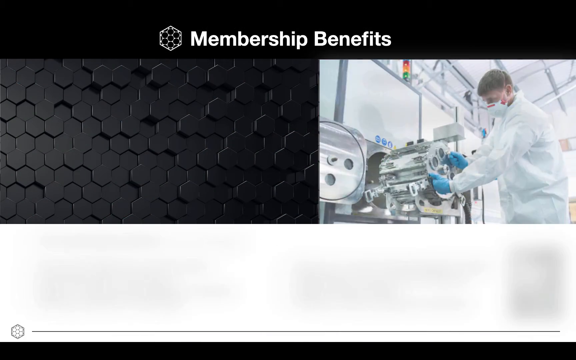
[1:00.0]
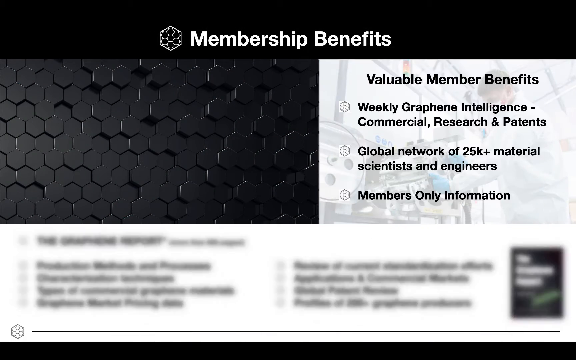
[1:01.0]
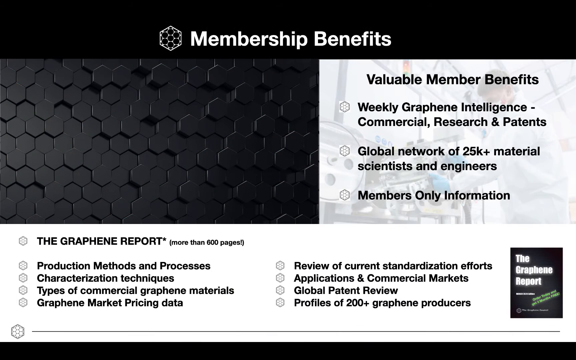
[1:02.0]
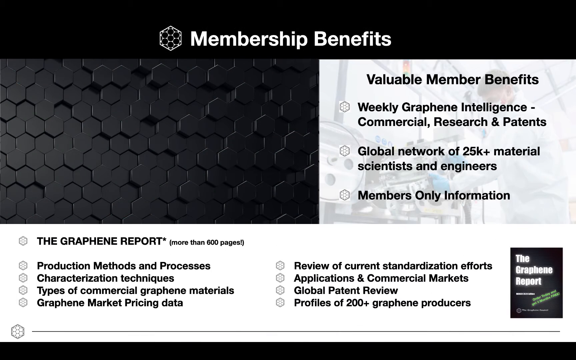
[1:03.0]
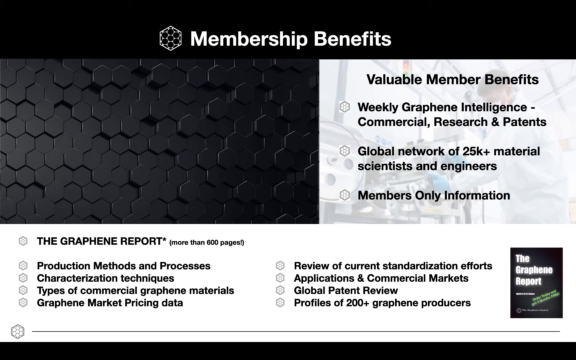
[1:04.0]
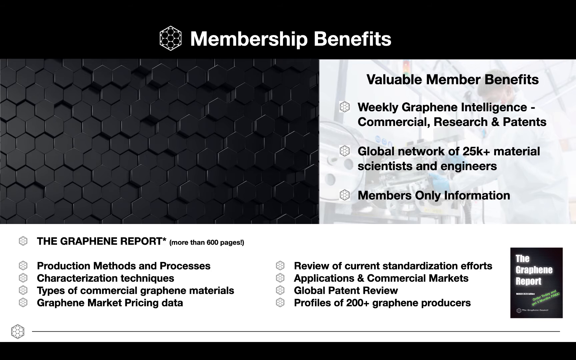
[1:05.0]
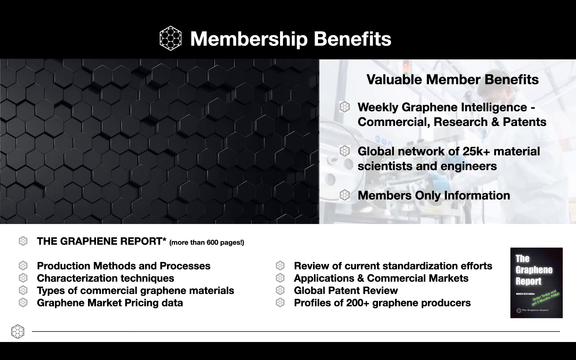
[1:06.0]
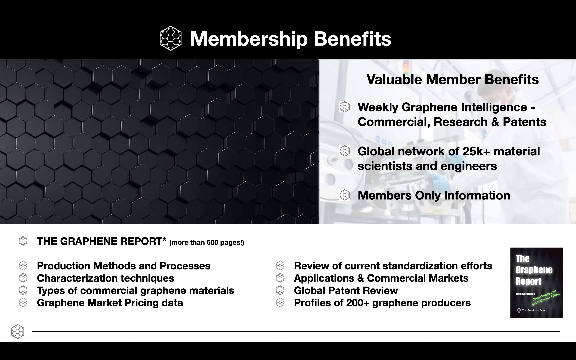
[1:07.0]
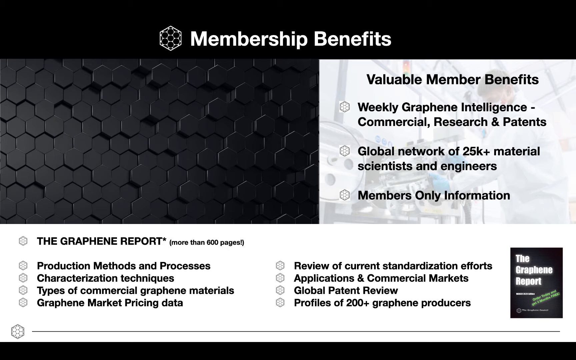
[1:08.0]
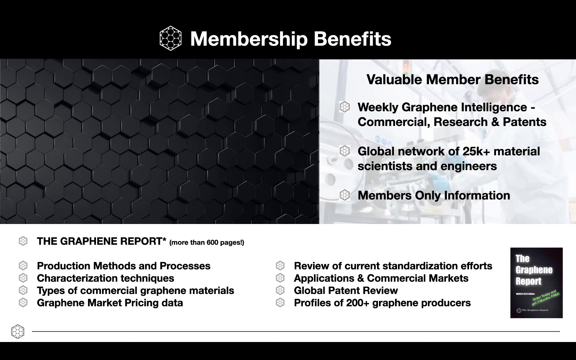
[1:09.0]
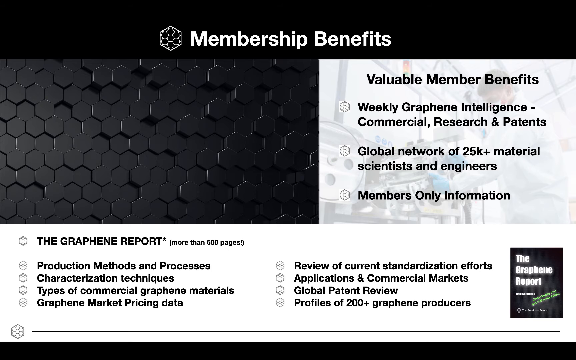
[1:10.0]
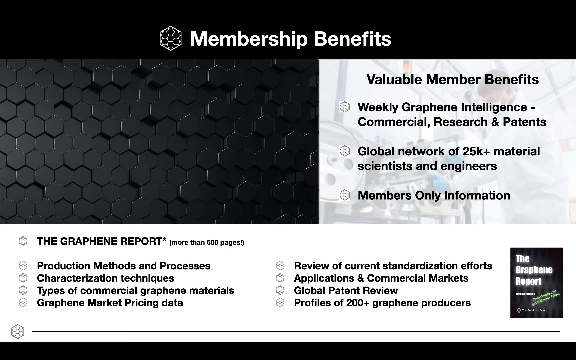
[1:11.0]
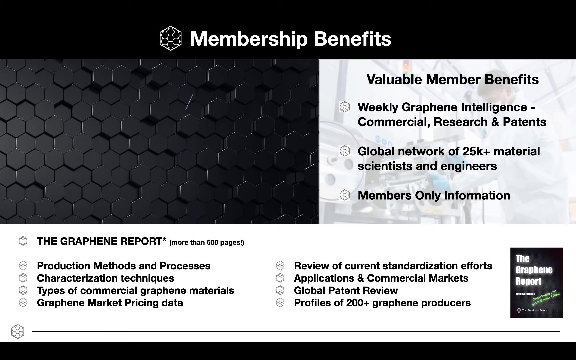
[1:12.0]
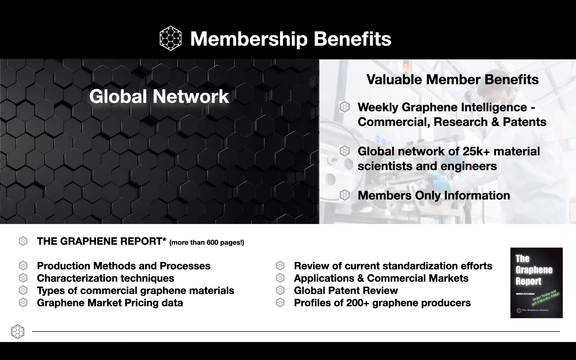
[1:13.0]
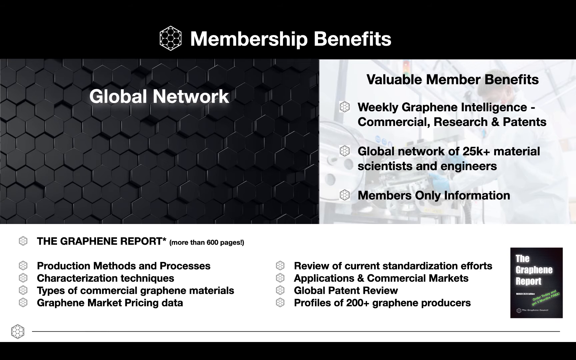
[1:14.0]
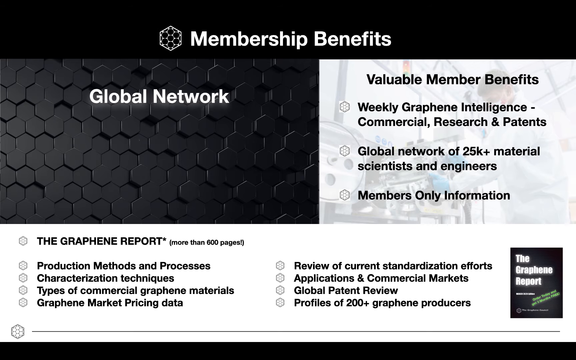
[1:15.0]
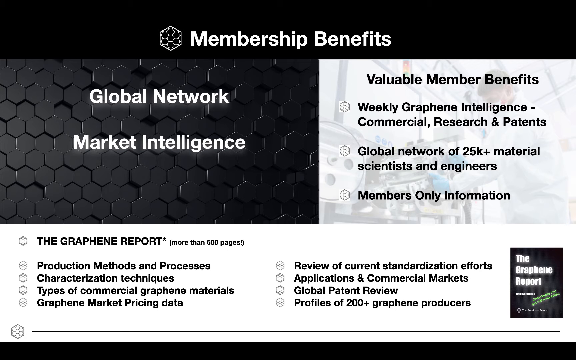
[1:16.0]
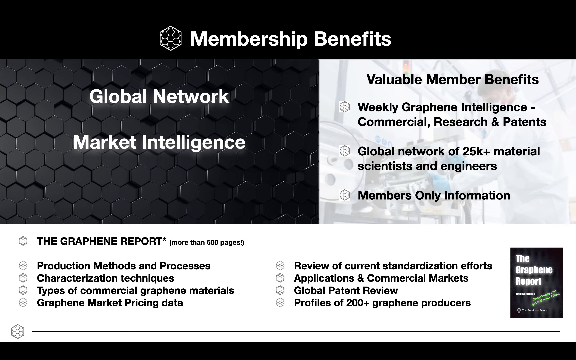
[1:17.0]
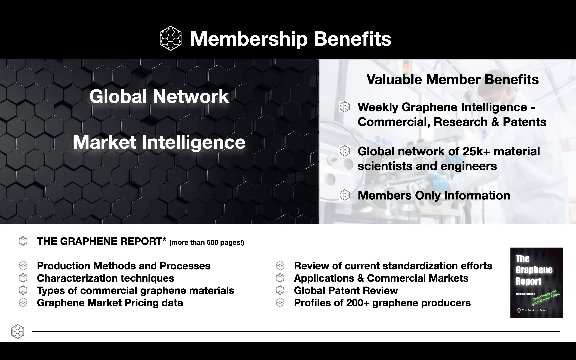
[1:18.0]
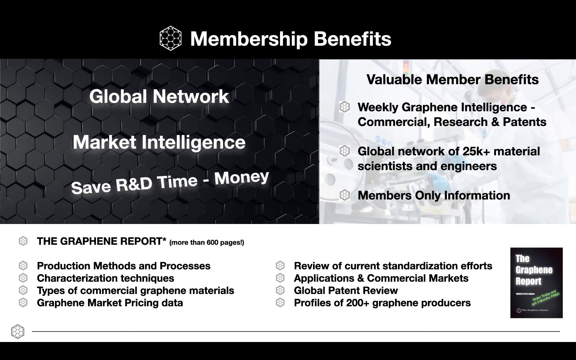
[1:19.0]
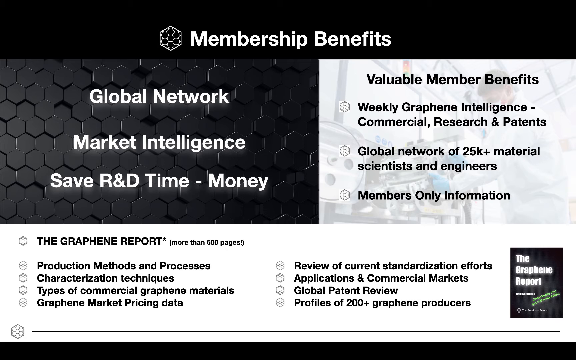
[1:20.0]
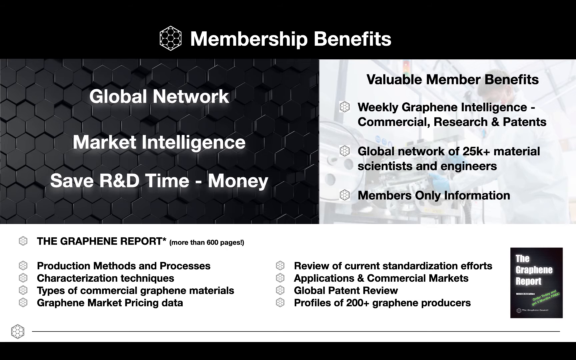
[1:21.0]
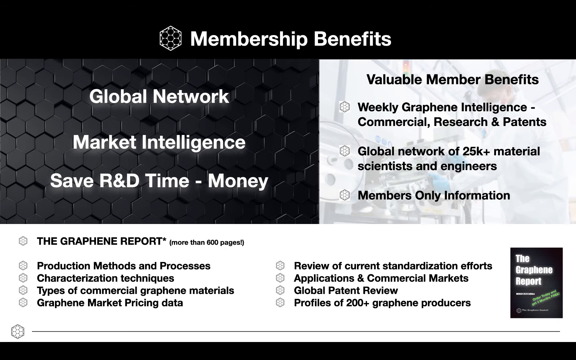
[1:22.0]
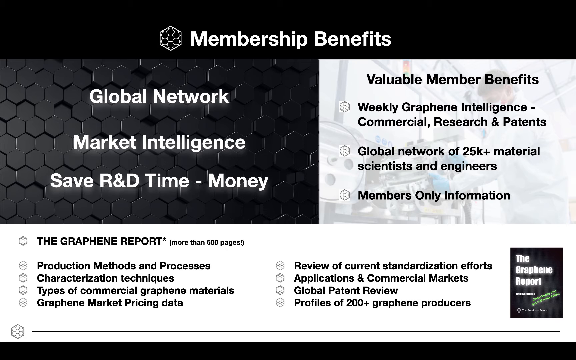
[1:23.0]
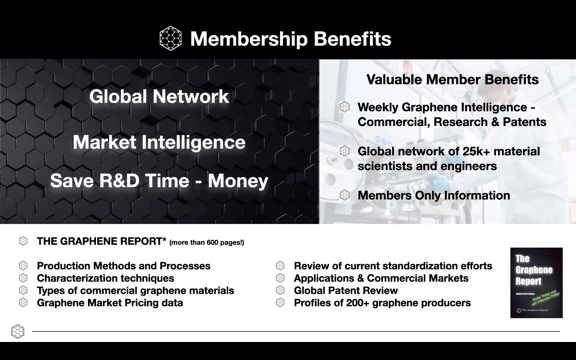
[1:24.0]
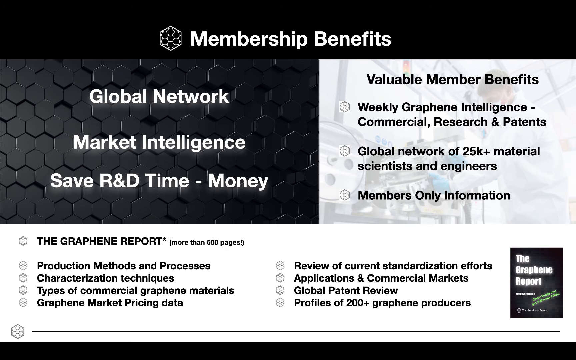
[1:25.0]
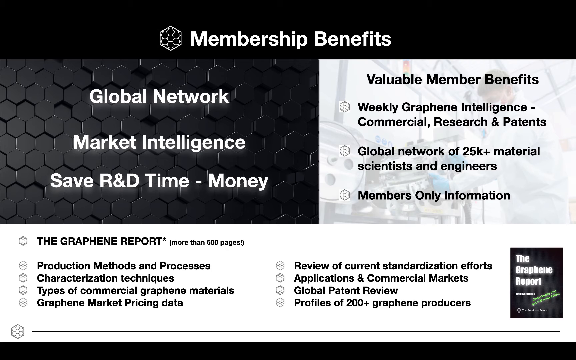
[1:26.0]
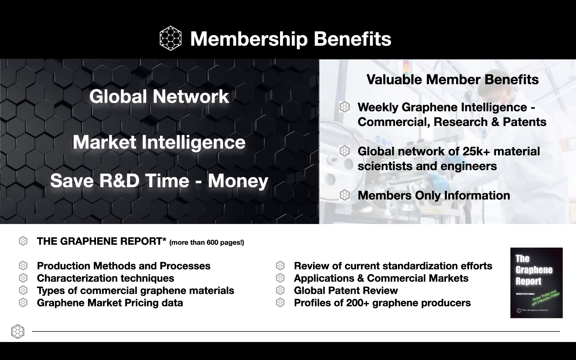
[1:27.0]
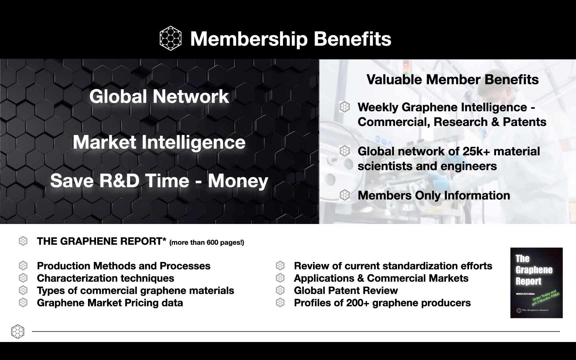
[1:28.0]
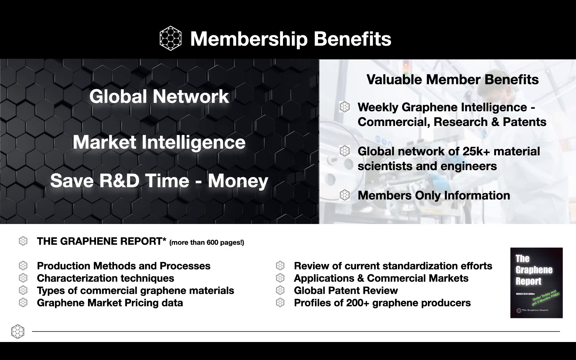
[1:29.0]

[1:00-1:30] A "membership benefits" slide appears, again showing the man in the white lab coat. Three bullet points in black text, each marked with a bullet that looks almost like a snowflake, list "weekly graphene," "graphene intelligence," "global network of 25,000" and "members only information." Along the bottom, from left to right, are more bullet points: "graphene report" on its own, four bullet points beneath it, and another column of four bullet points. To the right is what looks almost like a booklet advertising the graphene report, described as "over 600 pages" and including "profiles of 200 plus." Another twirl transition leads to "global network" beside a honeycomb image at the top left, where some cells lie flat, some stick up slightly and some are pushed in. Beneath it, with the same swoop, are "market intelligence" and "save R&D time-money," each in white text. The "membership benefits" text is black.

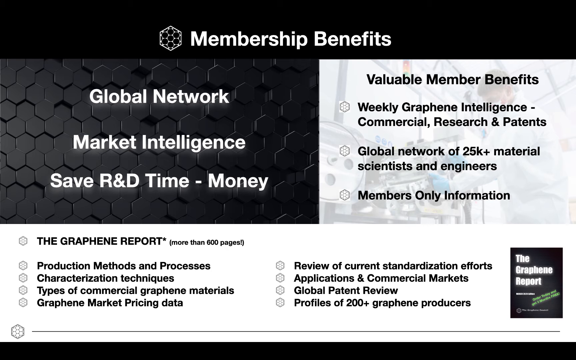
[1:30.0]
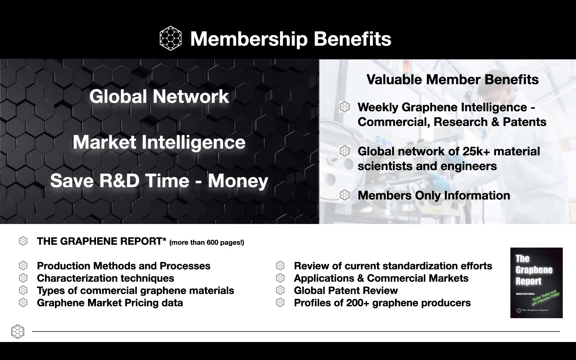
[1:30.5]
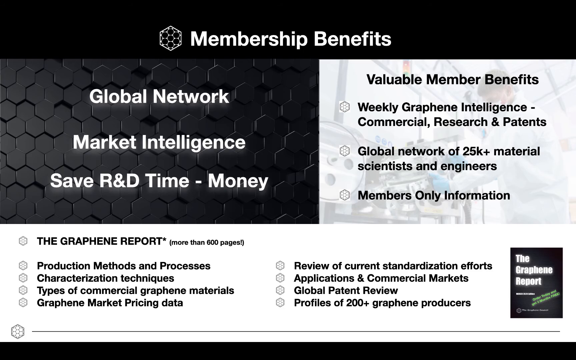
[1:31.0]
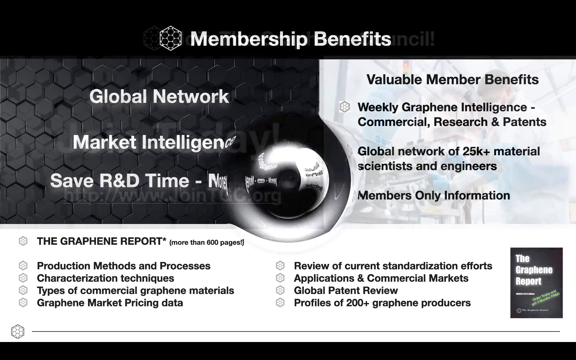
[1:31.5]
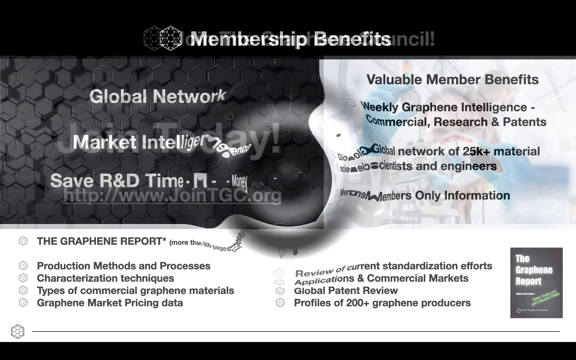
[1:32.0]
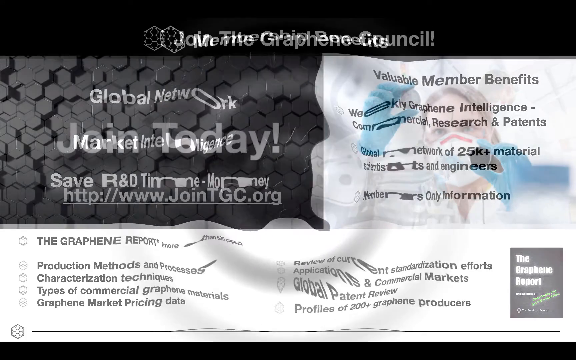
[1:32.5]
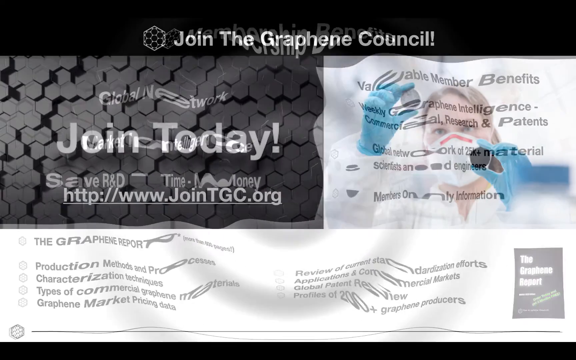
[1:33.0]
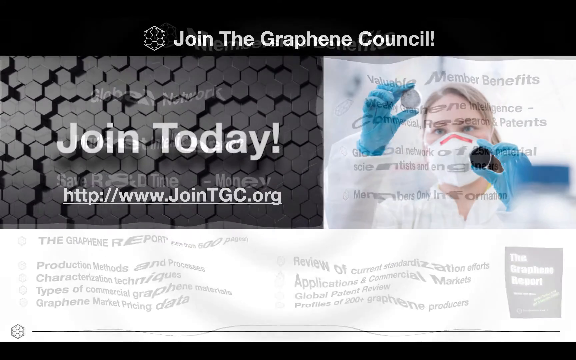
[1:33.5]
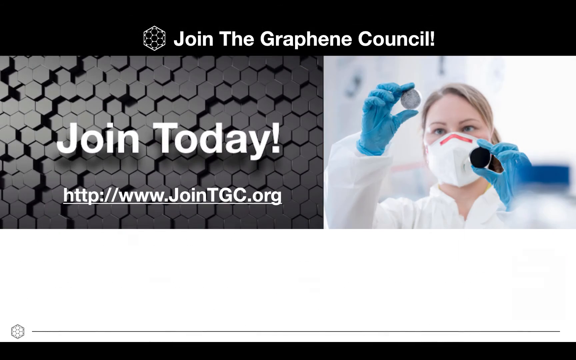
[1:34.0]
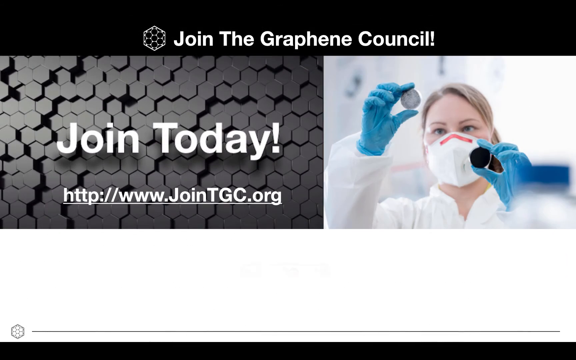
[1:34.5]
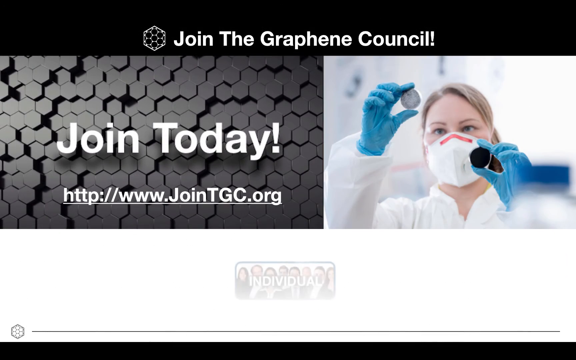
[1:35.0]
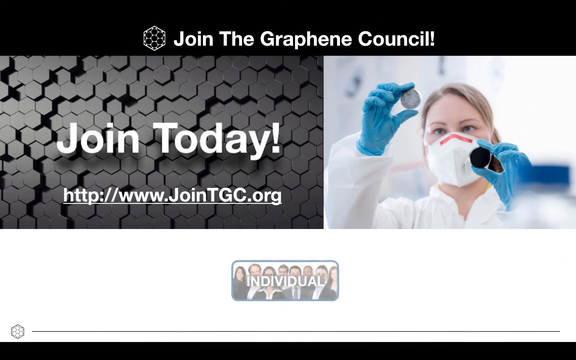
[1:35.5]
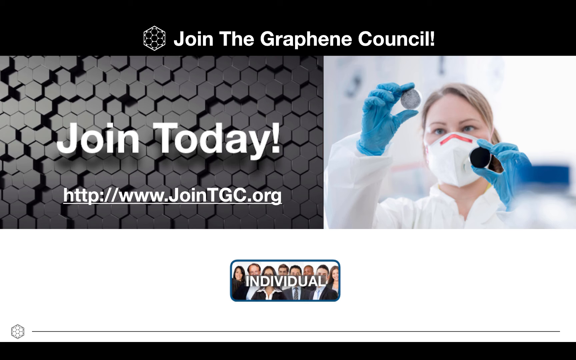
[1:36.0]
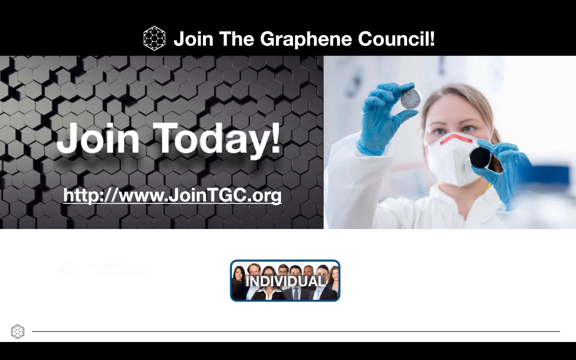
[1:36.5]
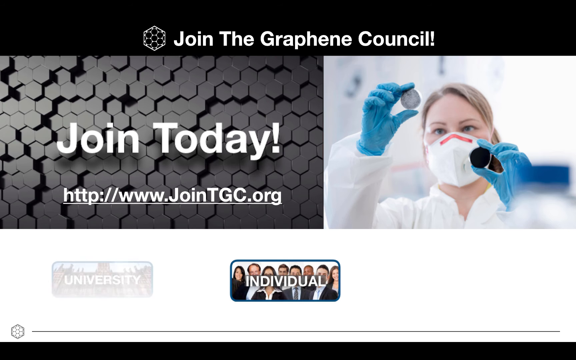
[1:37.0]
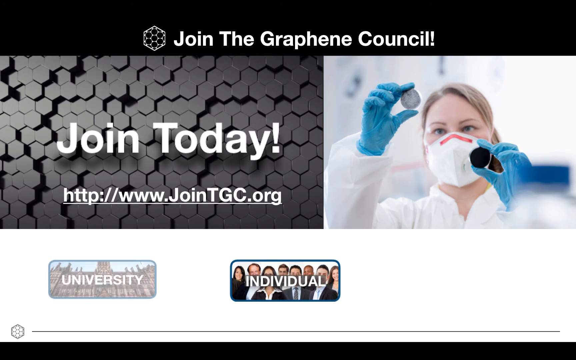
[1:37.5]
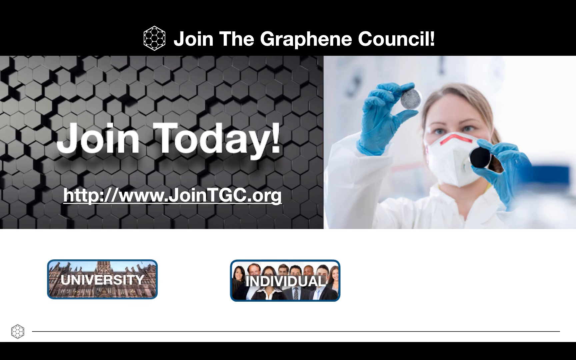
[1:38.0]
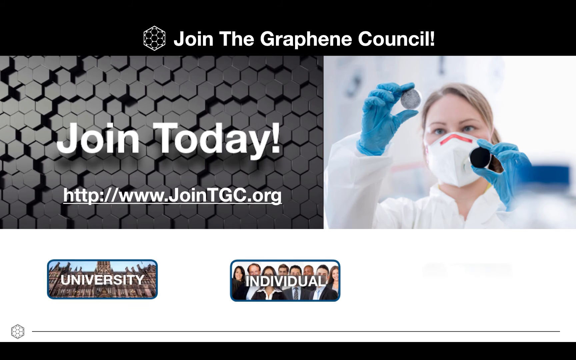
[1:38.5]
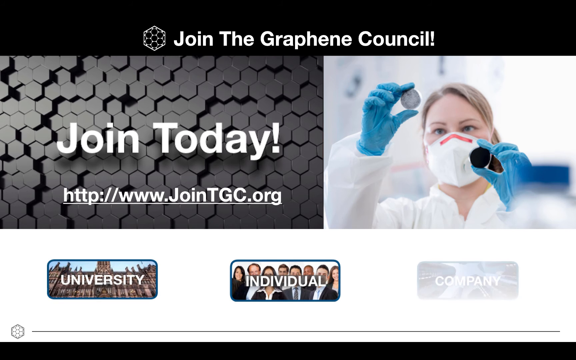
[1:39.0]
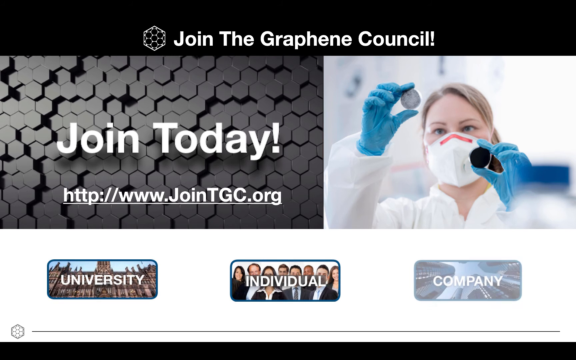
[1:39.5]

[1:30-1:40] A puddle effect leads to "join the graphene council" at the top, with a link for joining and the honeycomb graphic behind it. On the right is a close-up of a woman holding a circular object in her fingers; she holds two items that look almost like the honeycomb pieces. She wears blue latex gloves, a white lab coat and a white mask with a red piece of tape at its bottom, and is visible from the chest up. The image fades into a wallpaper-like background where "individual" appears in white text over a group of people, becoming bolder as the view zooms in. Boxes labeled "university," "individual" and "company" run from left to right. The slide has a black bar with white reverse-print text at the top, the snowflake-looking logo, split boxes with global network, benefits and graphene reports, and a link to join.